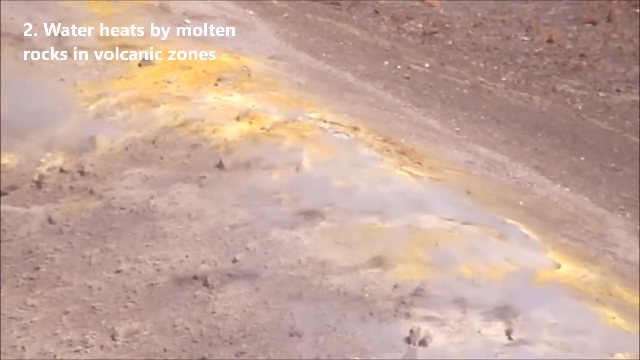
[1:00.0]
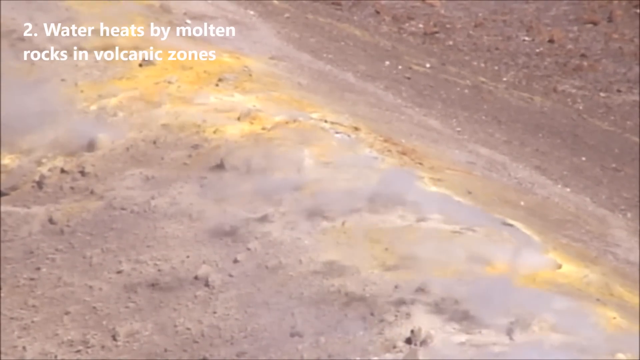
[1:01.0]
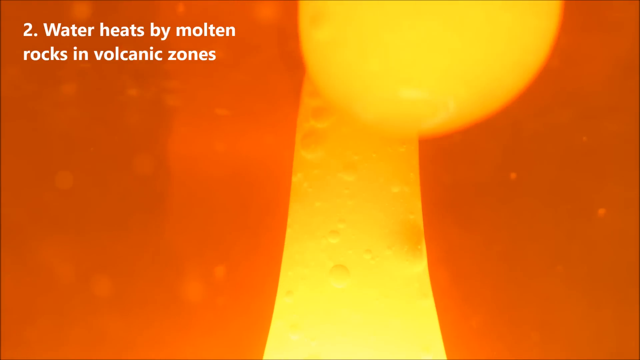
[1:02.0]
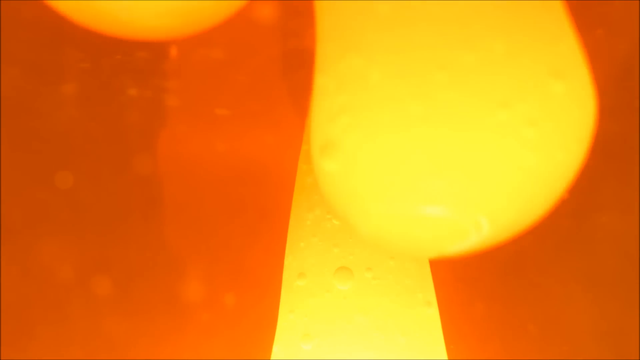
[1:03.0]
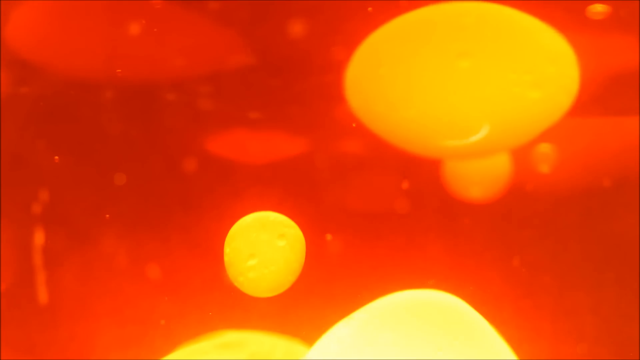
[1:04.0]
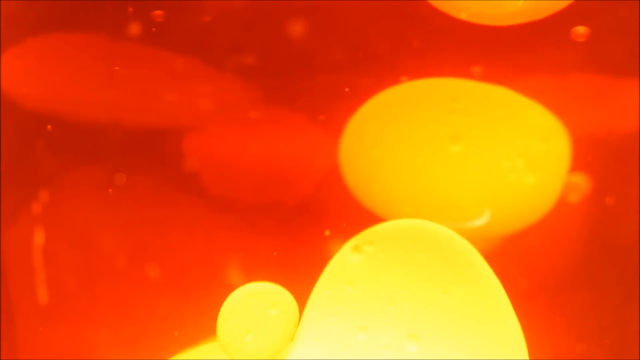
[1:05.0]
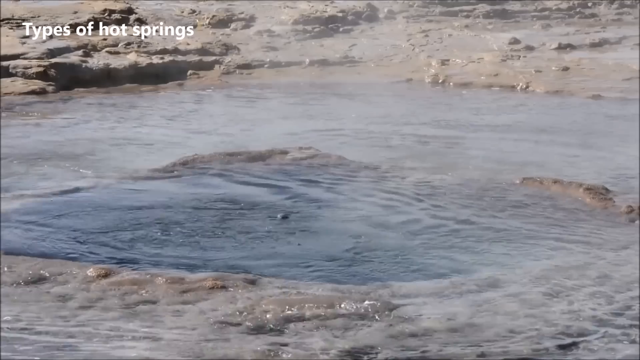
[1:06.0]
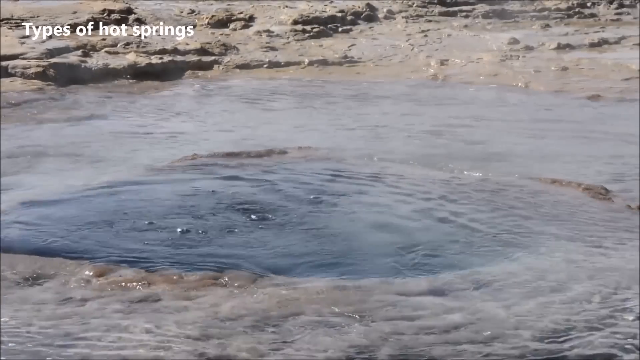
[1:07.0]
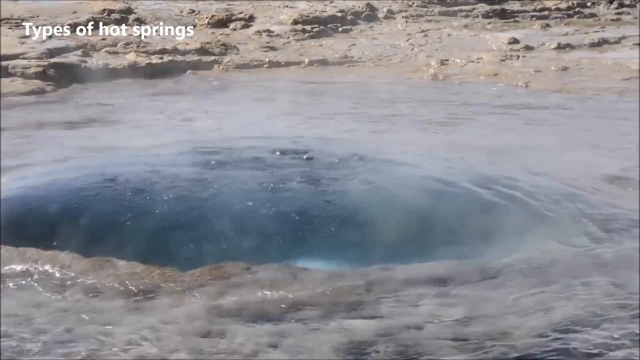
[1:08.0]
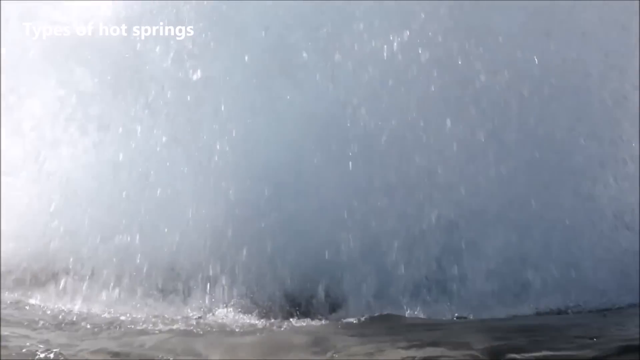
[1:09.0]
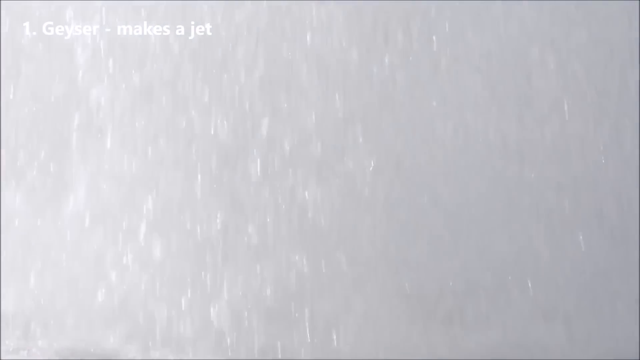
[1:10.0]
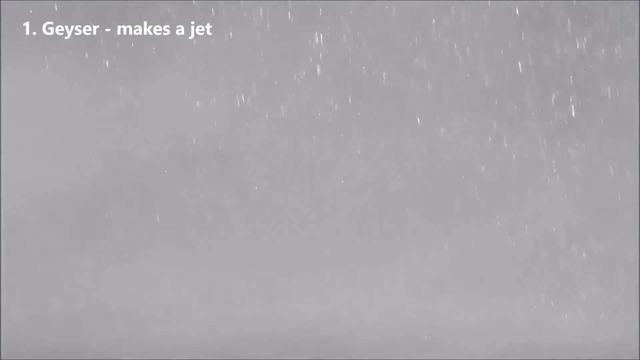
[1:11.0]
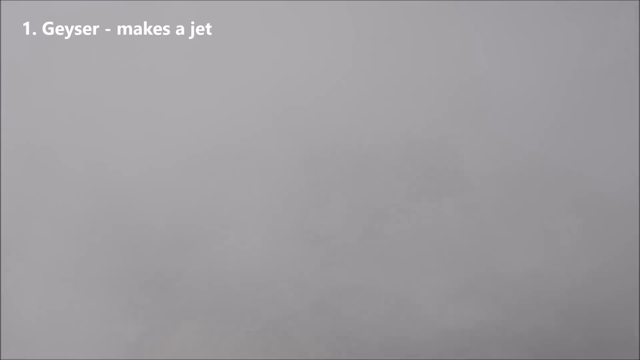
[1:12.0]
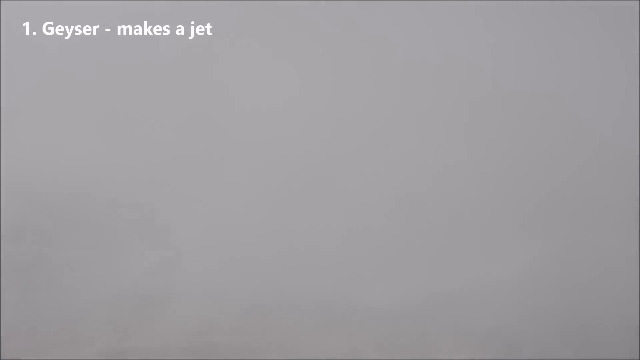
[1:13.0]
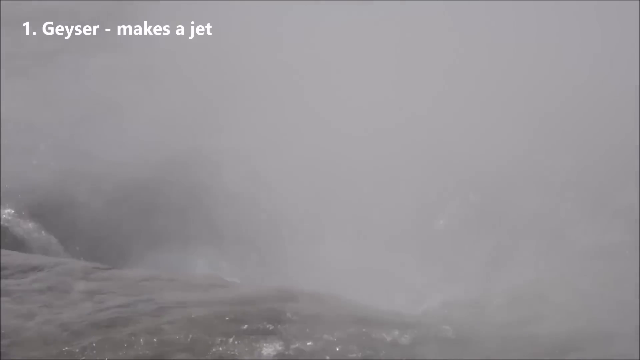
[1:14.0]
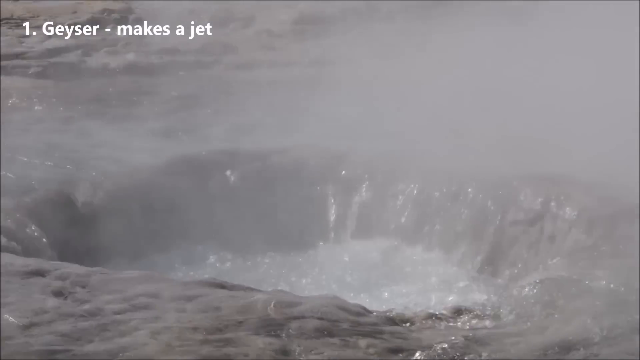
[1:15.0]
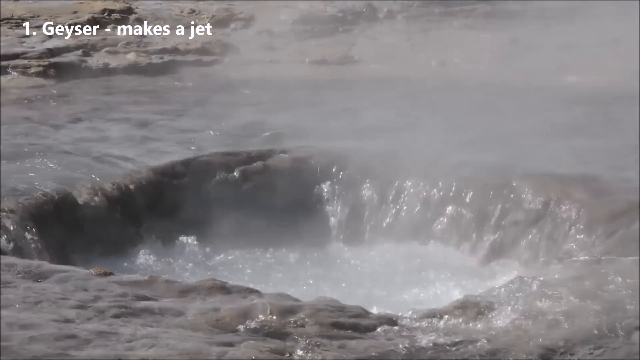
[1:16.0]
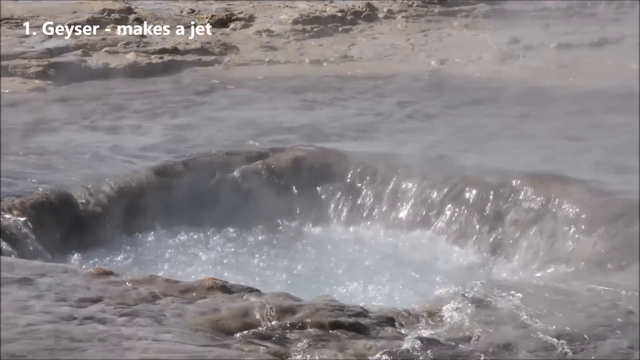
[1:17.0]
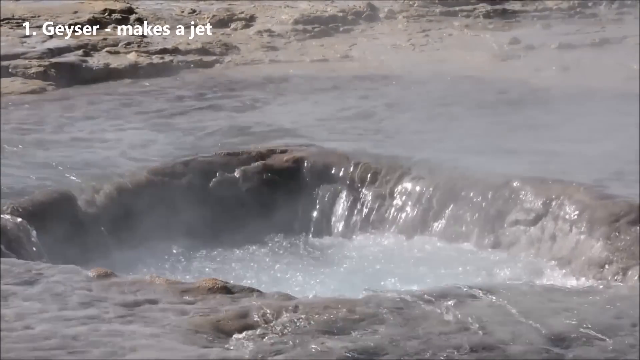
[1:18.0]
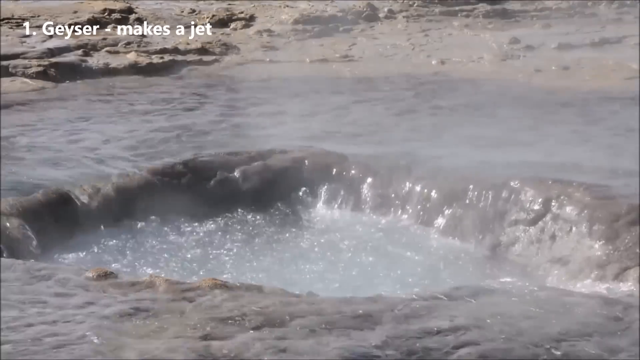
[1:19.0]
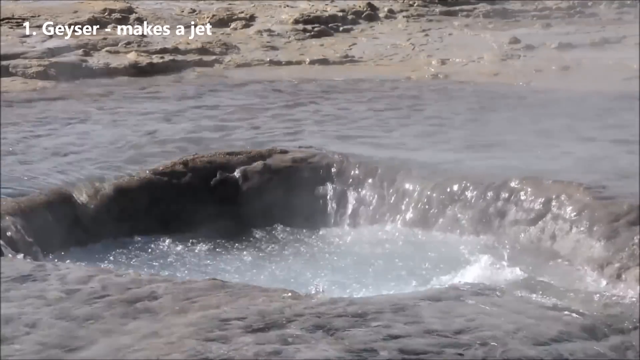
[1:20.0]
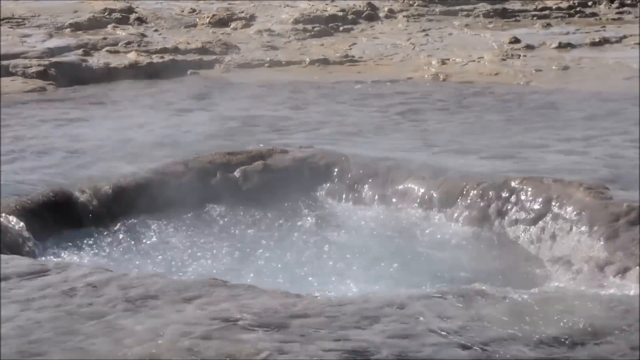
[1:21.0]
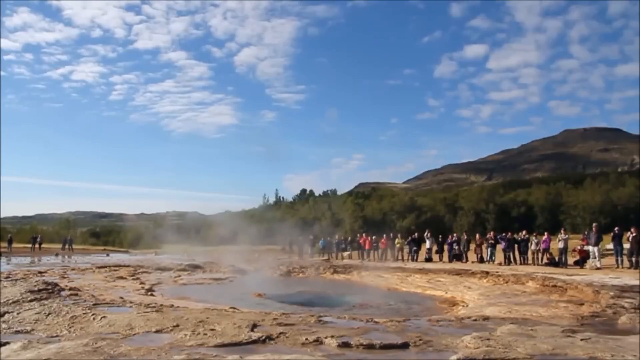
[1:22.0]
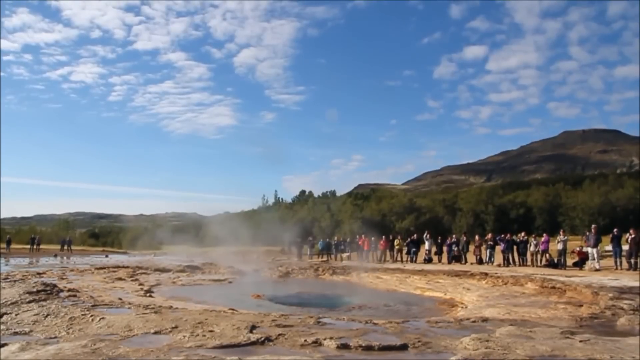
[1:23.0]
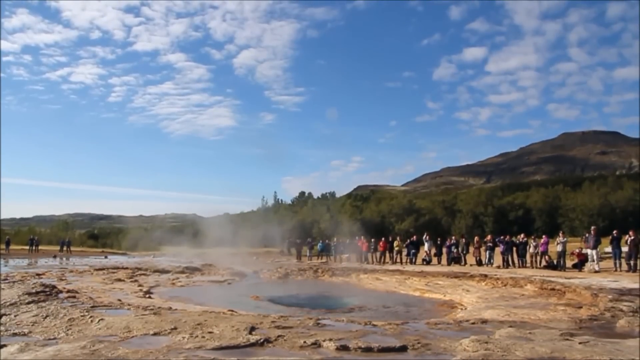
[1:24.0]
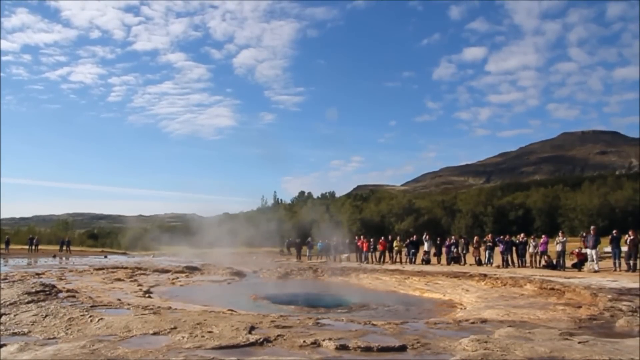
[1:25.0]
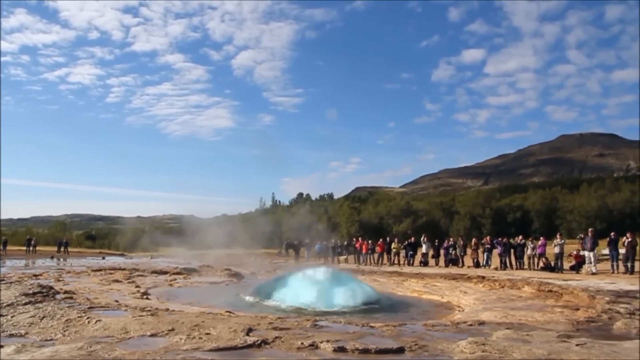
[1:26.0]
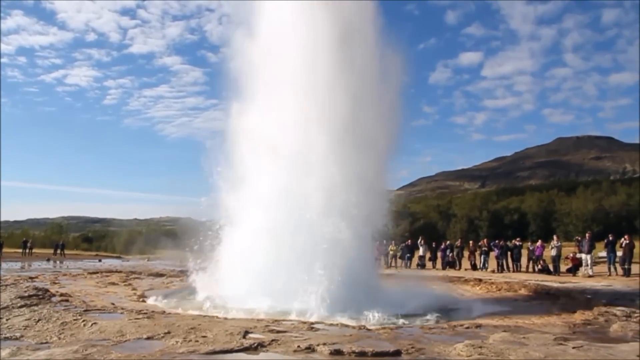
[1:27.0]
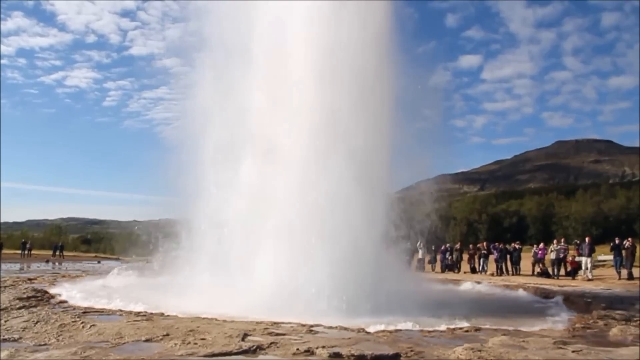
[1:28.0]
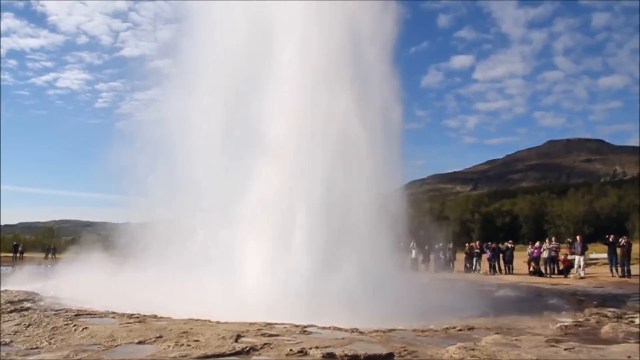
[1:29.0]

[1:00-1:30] A brown field with small rocks is shown; in the middle is a line full of yellow painted parts of the earth, and smoke or vapor seems to be coming out of it. The caption "2. water heats by molten rocks in volcanic zones" remains on screen. The video cuts to a screen with an orange background where yellow liquid particles appear. Next is footage of a hot spring with the caption "types of hot springs" at the top. The water erupts upward with a big explosion, and the caption reads "1. geyser - makes a jet." In the water there seems to be a hole where more water gathers, and people take shots of the water as it explodes into the jet.